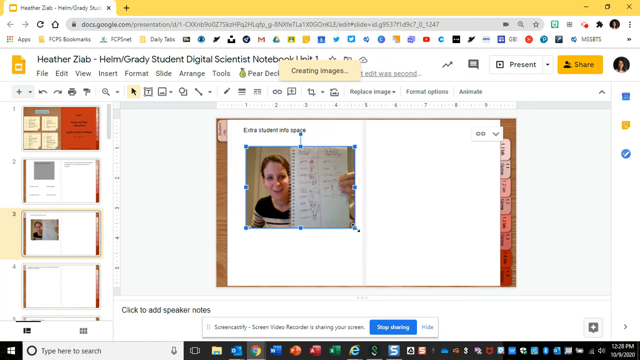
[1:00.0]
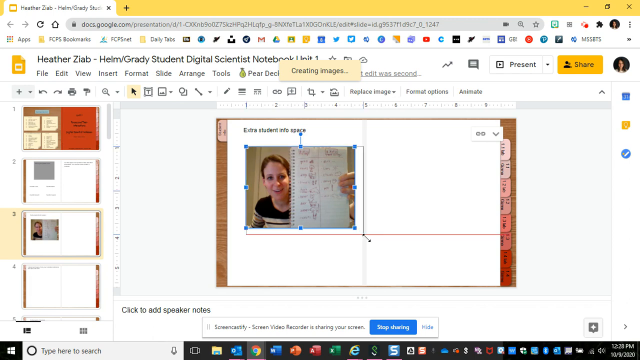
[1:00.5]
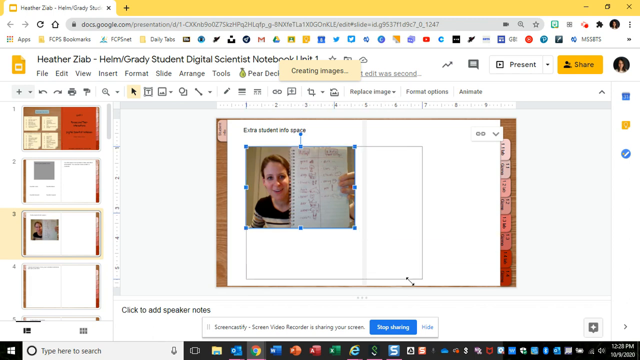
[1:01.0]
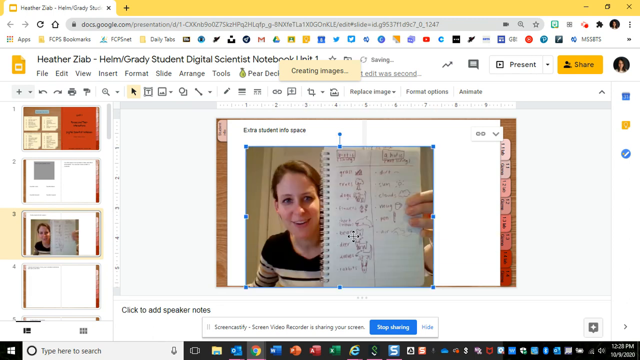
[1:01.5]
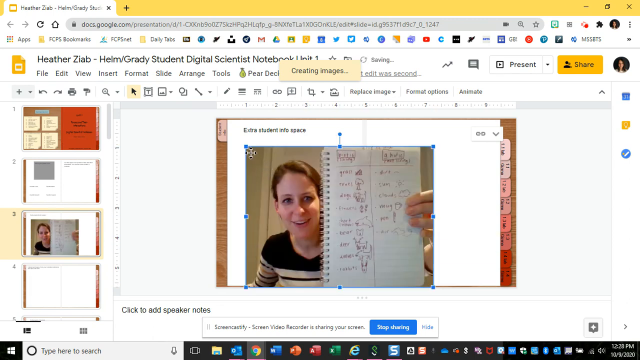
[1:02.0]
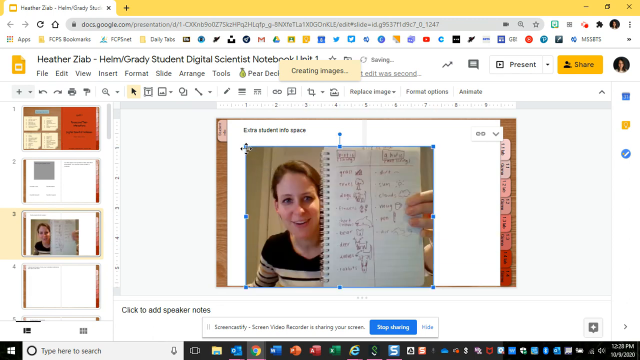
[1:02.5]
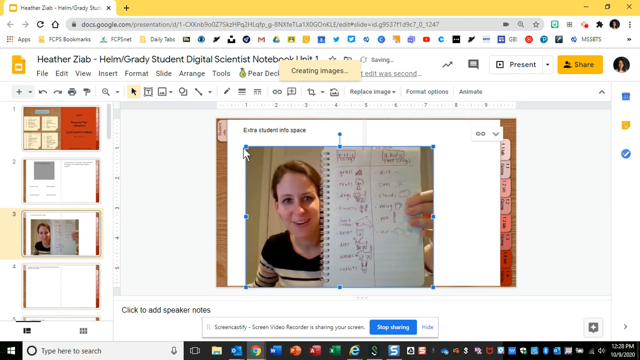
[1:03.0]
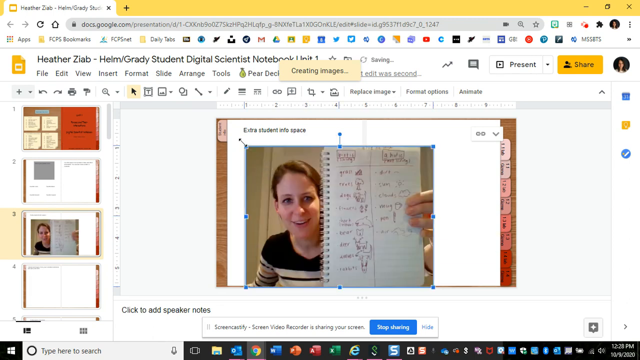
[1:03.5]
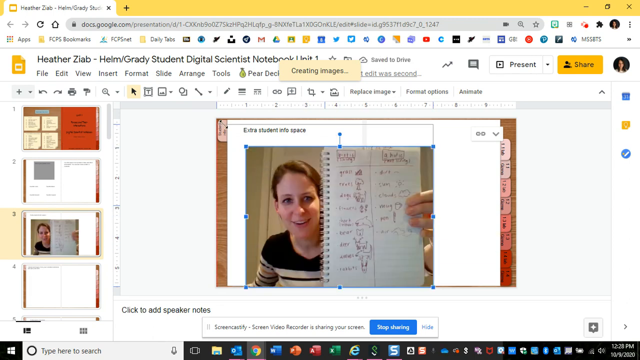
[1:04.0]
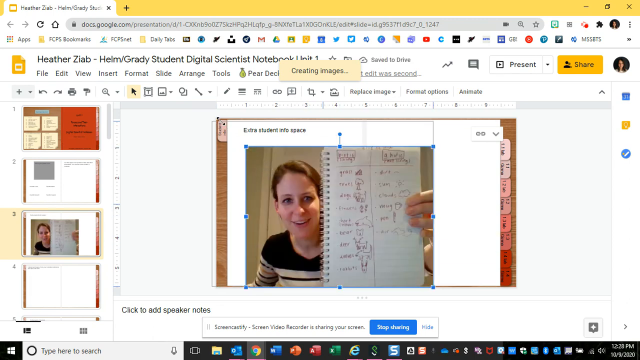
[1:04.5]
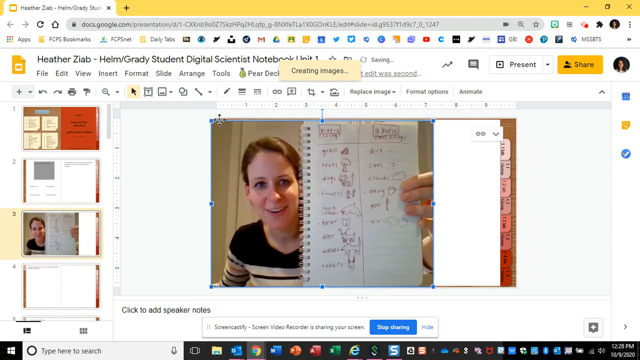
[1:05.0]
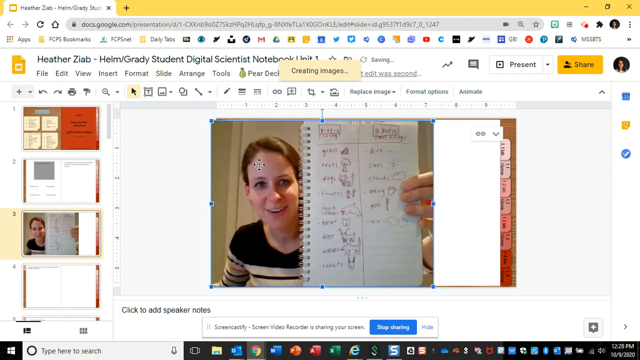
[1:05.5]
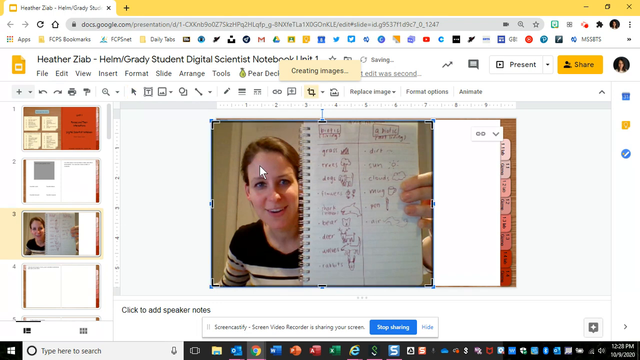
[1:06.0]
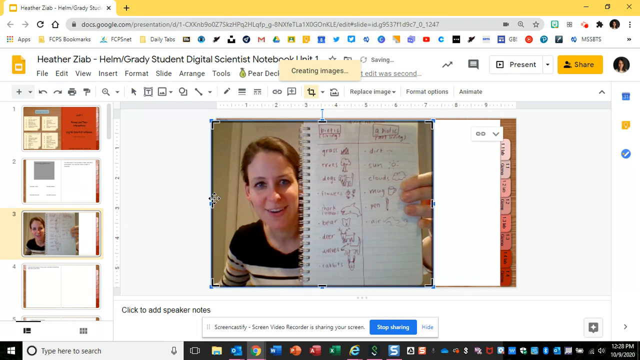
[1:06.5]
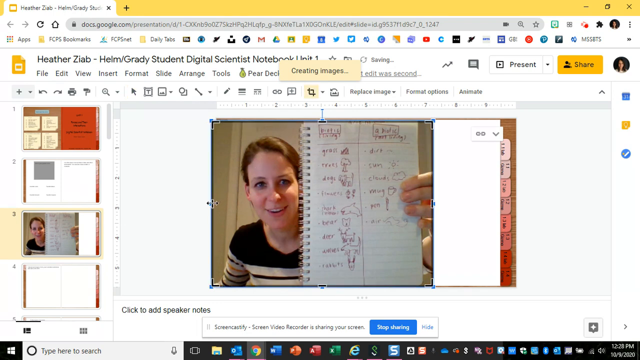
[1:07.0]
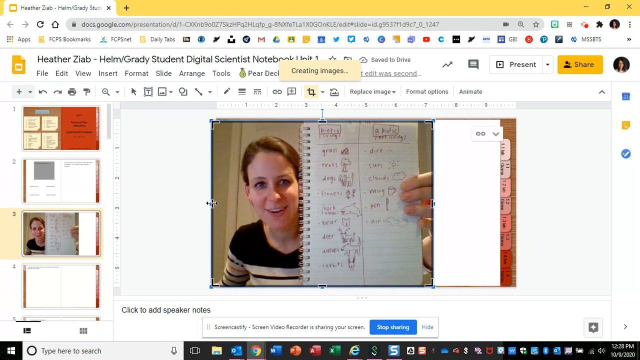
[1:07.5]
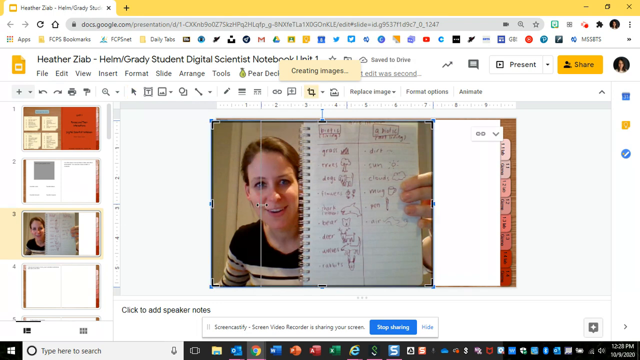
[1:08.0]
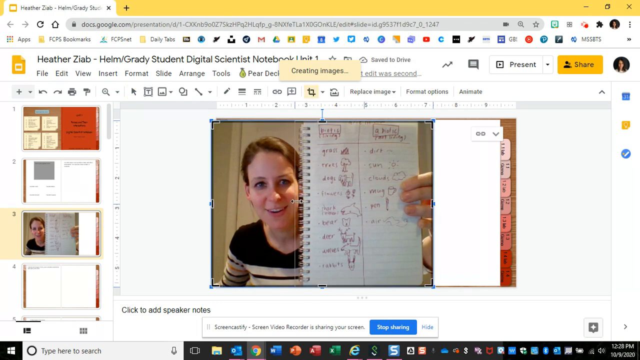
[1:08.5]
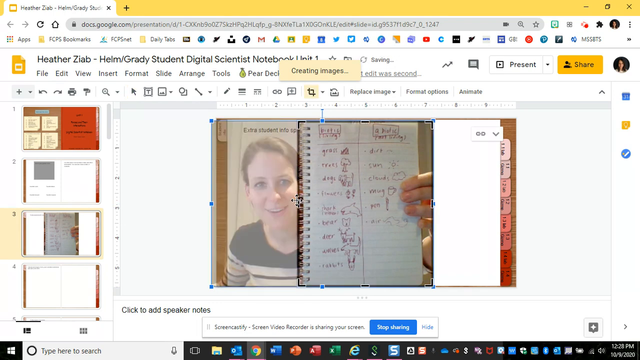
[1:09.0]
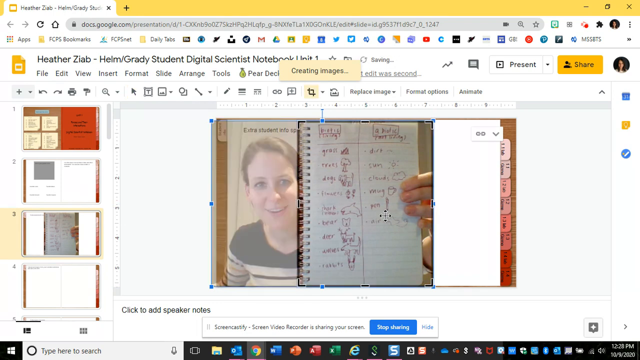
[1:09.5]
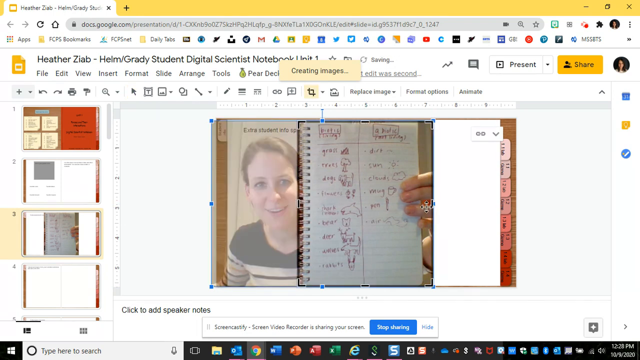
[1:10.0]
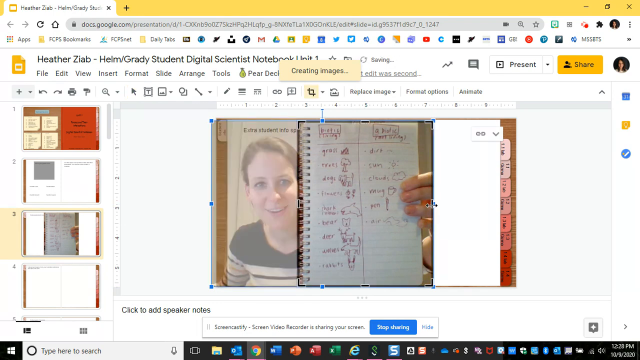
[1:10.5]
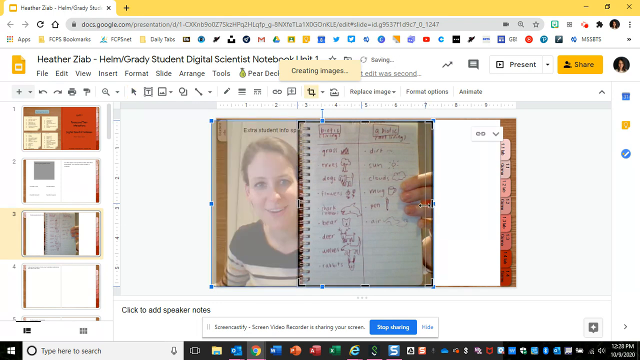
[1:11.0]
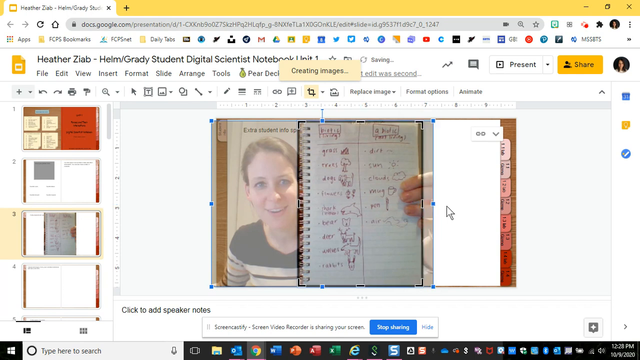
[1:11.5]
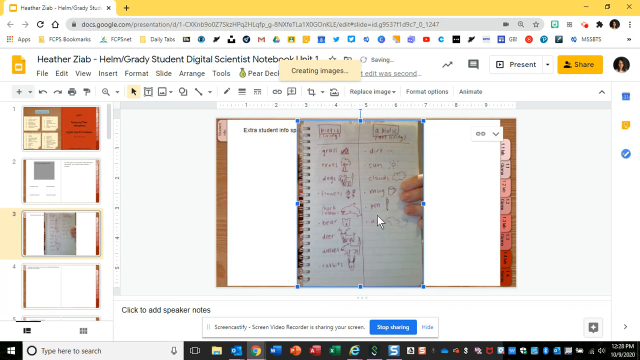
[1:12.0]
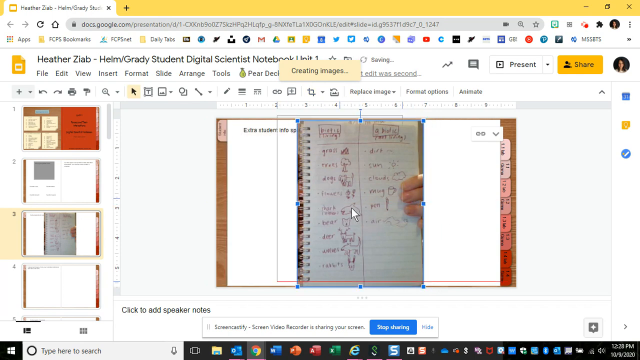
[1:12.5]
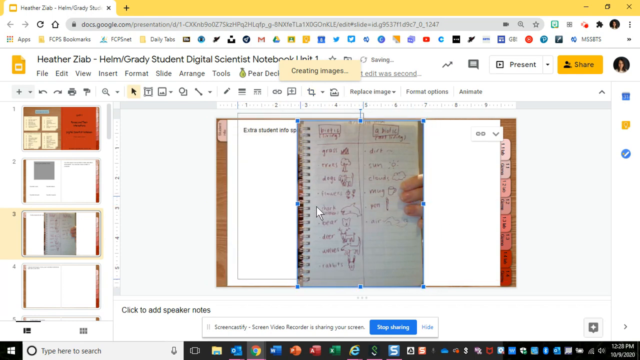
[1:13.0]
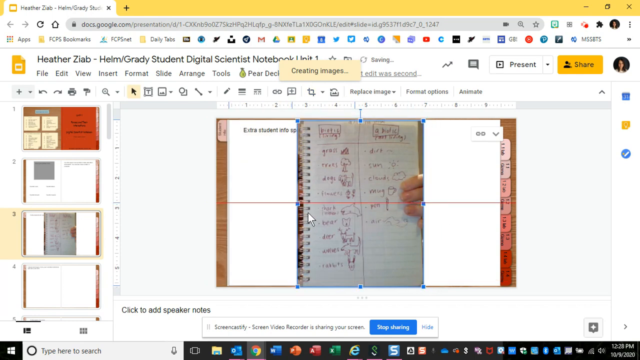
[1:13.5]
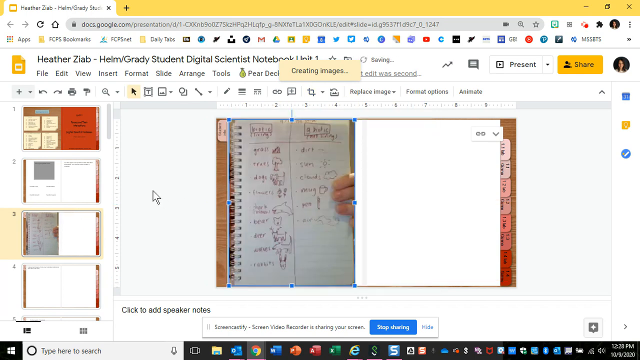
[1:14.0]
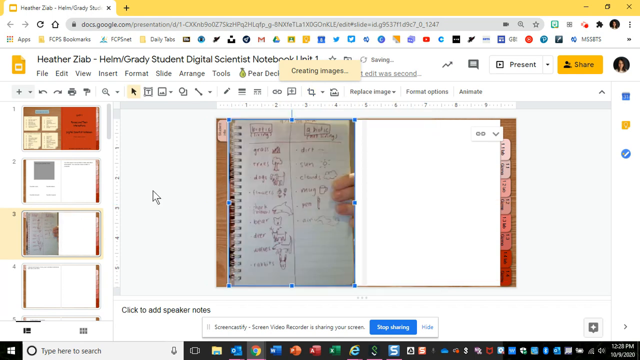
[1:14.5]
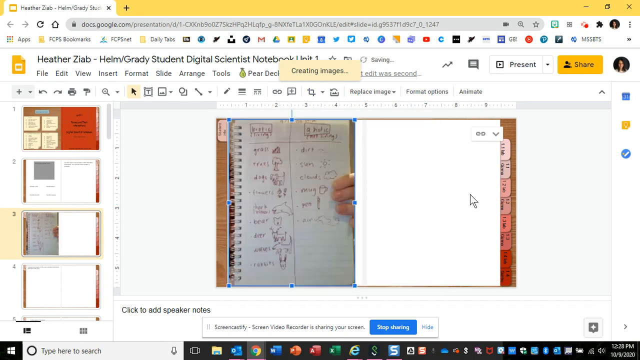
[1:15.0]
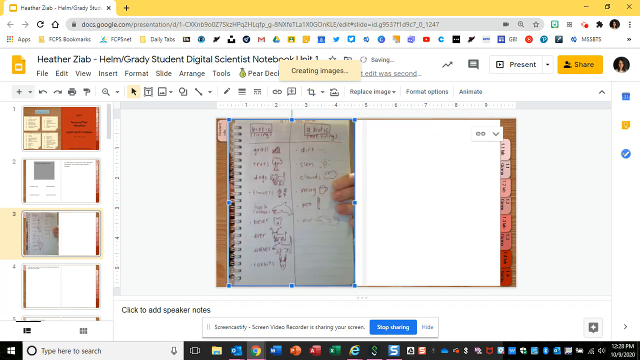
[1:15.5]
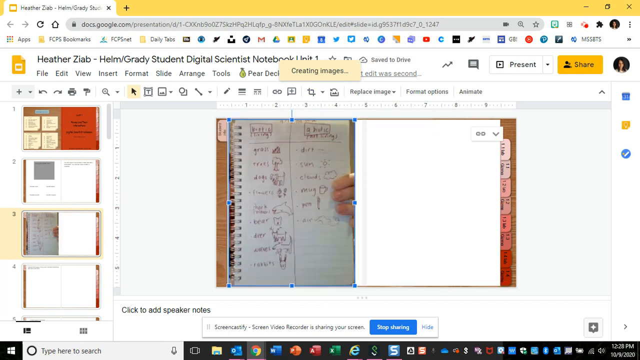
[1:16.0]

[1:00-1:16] She makes the picture much bigger by extending the corners until it takes up the whole notebook rather than just one page, then makes it even larger. She then crops herself out, leaving only the notebook in the photograph, and places the notebook photo on the first page of the notebook. The step-by-step tutorial takes place in a browser on a Google Slides or Google Documents page, with a menu ribbon of icons and a menu bar with words such as File, Edit, View, Insert, Format, Slide, Arrange and Tools.